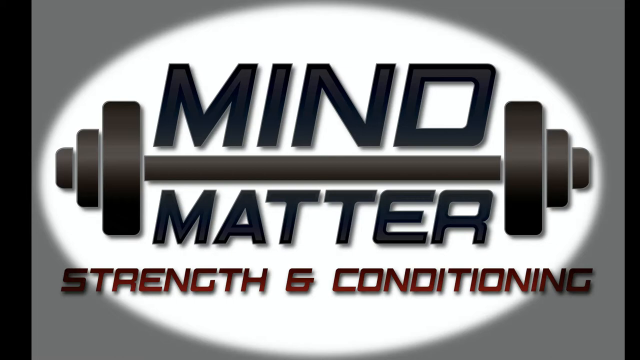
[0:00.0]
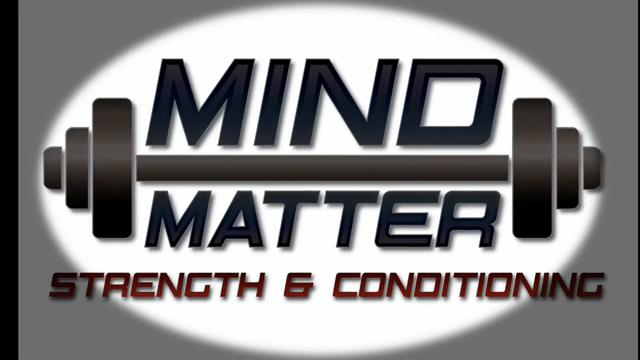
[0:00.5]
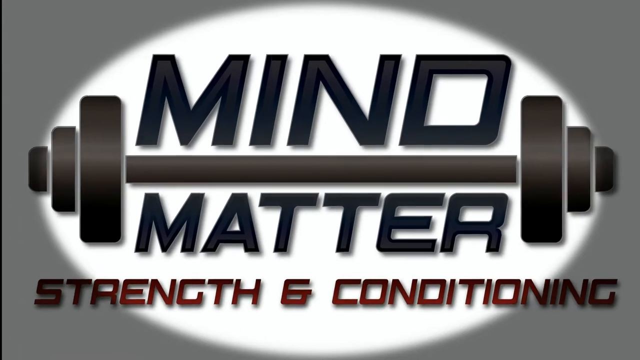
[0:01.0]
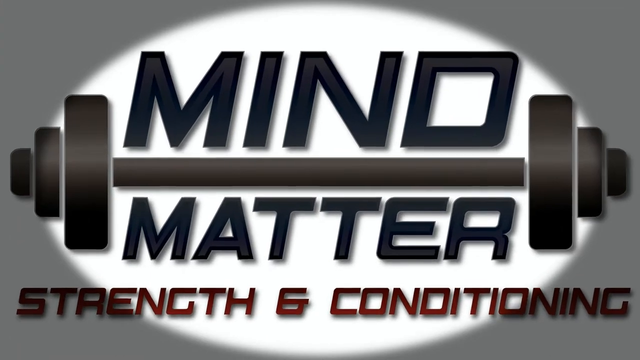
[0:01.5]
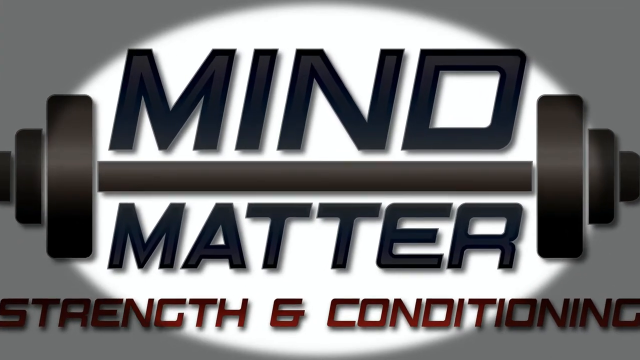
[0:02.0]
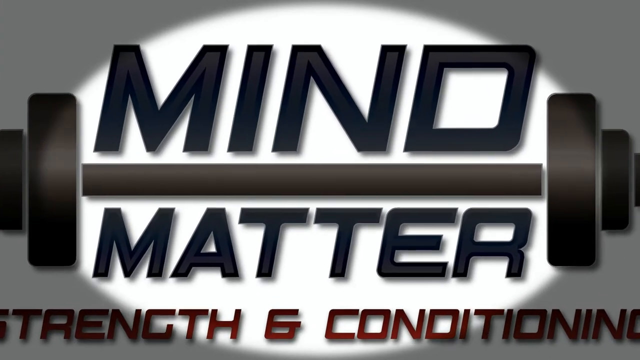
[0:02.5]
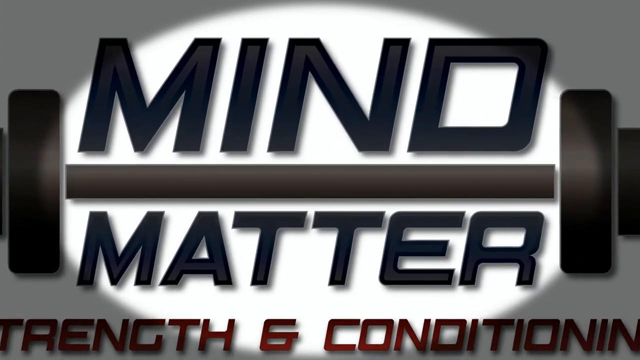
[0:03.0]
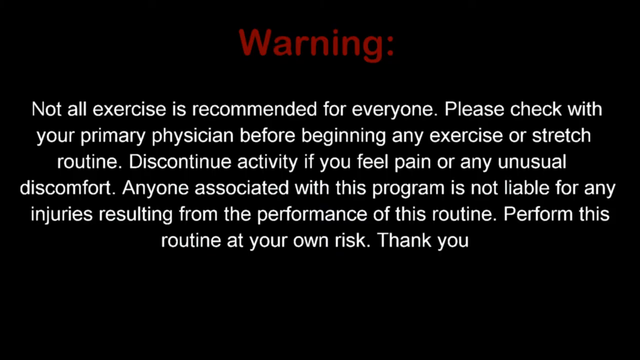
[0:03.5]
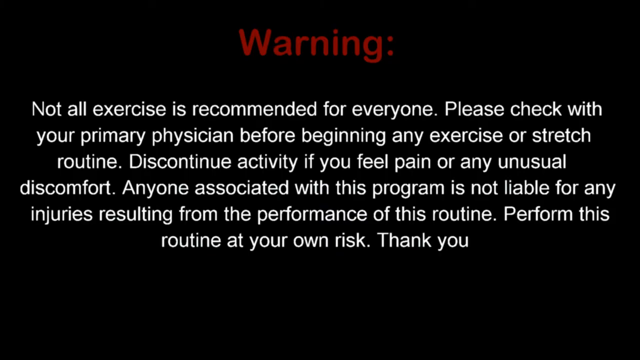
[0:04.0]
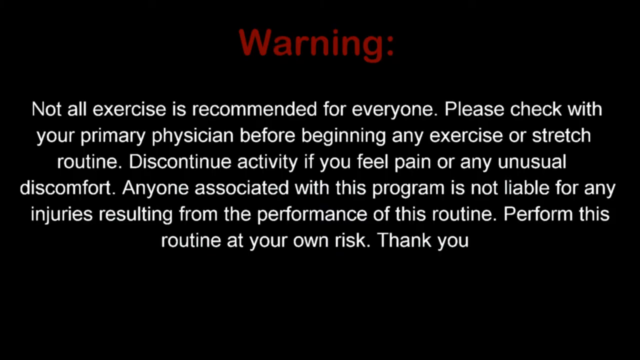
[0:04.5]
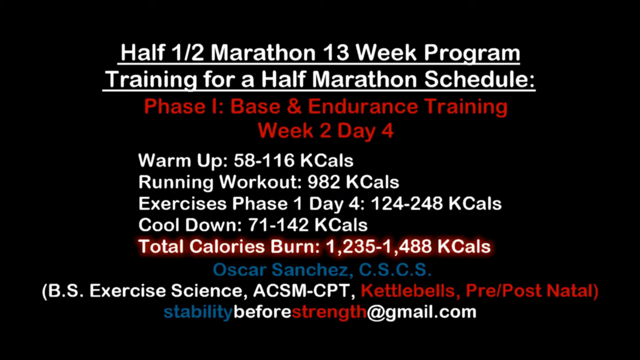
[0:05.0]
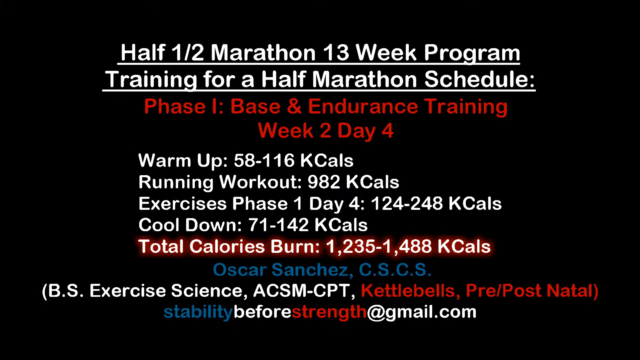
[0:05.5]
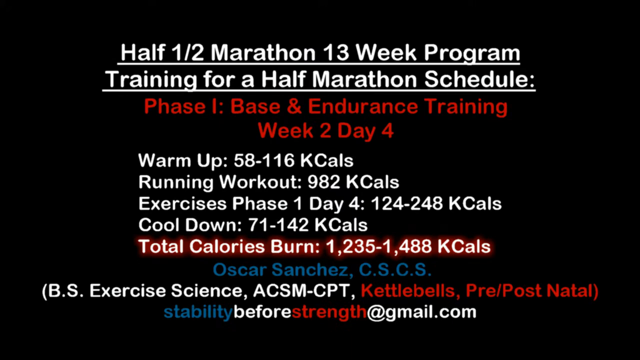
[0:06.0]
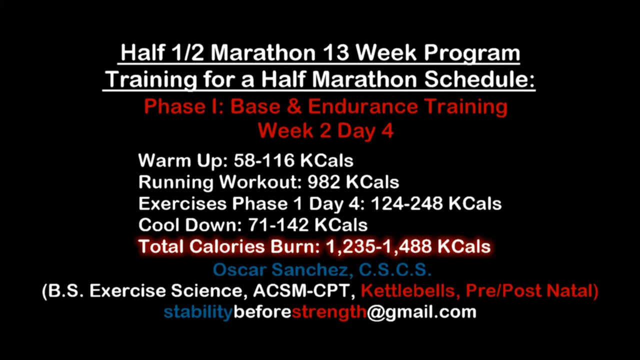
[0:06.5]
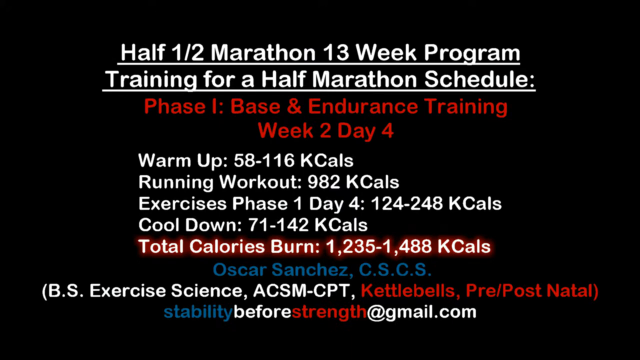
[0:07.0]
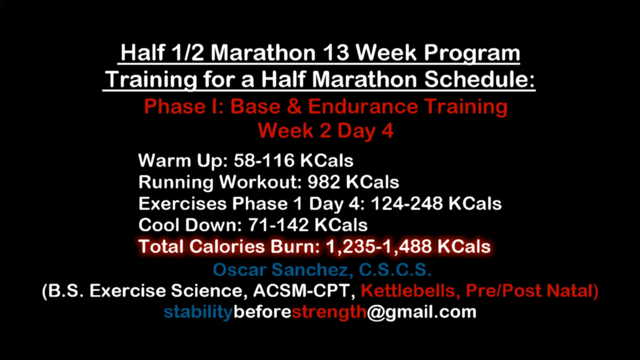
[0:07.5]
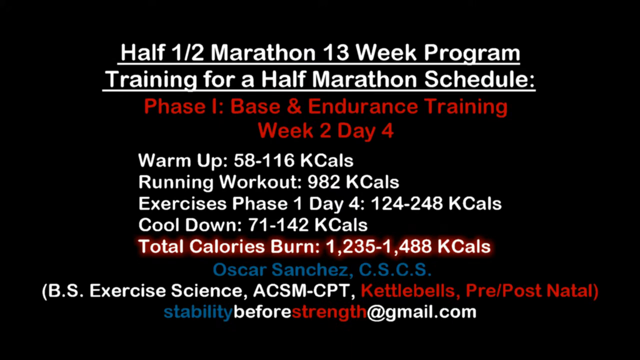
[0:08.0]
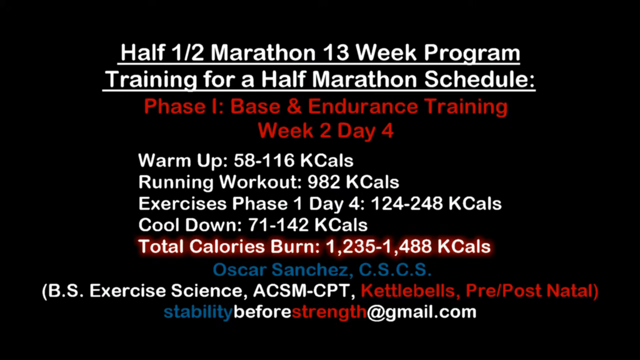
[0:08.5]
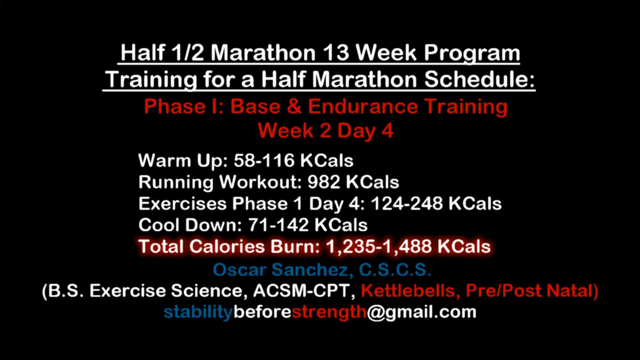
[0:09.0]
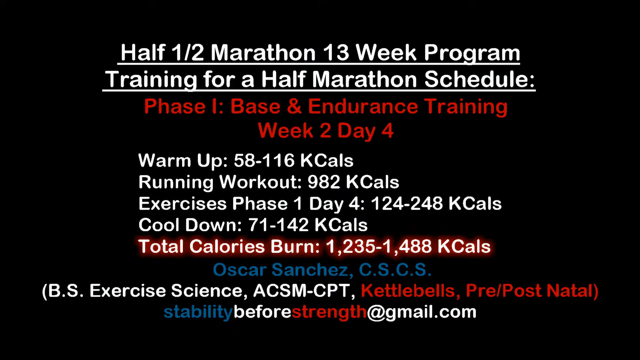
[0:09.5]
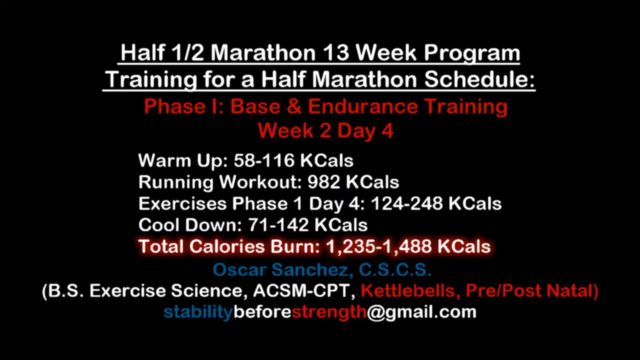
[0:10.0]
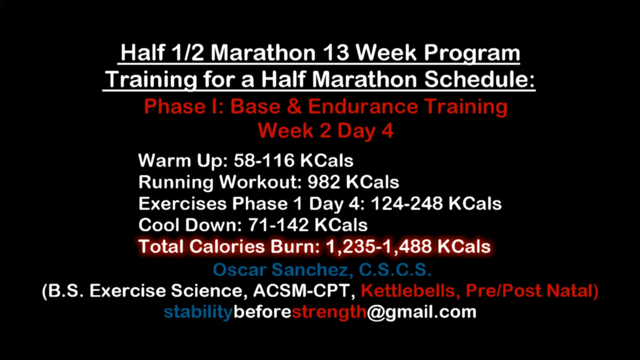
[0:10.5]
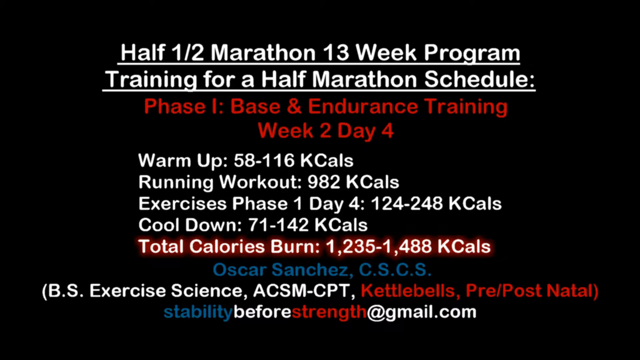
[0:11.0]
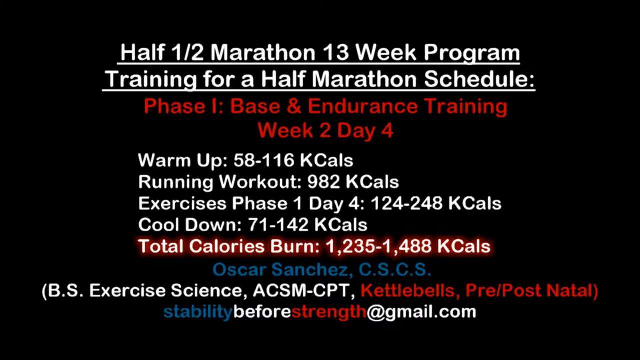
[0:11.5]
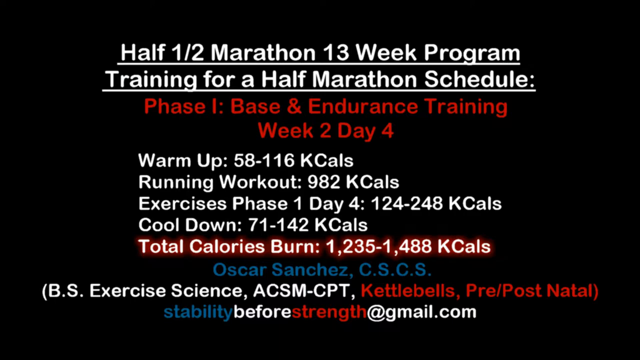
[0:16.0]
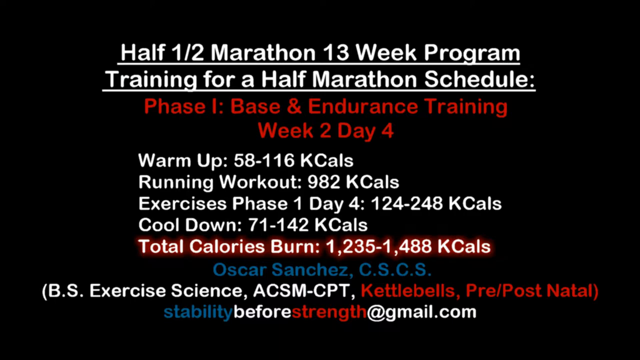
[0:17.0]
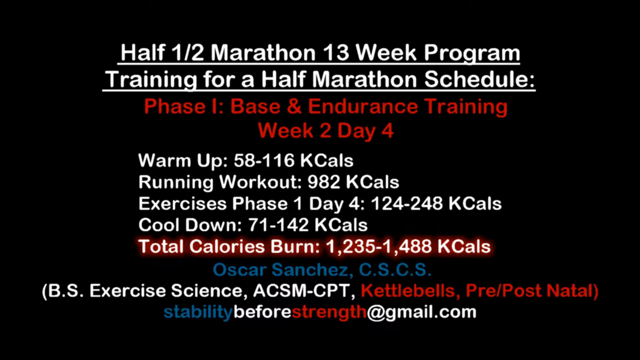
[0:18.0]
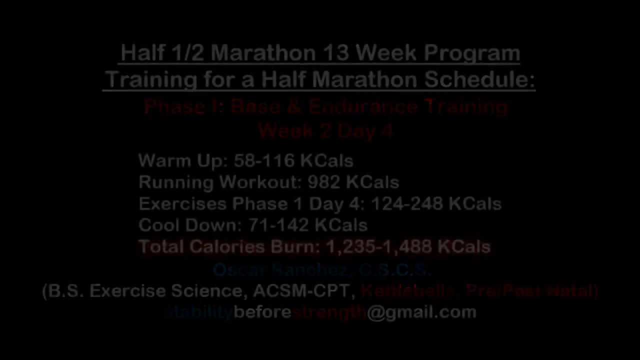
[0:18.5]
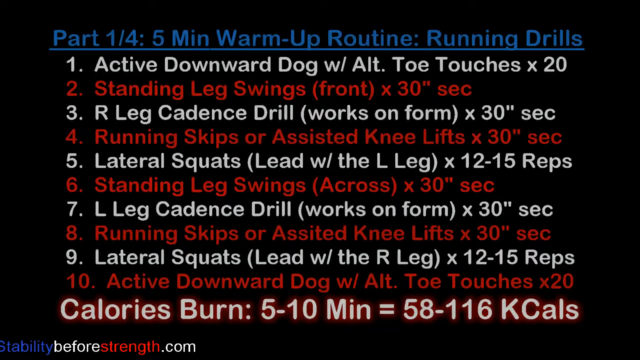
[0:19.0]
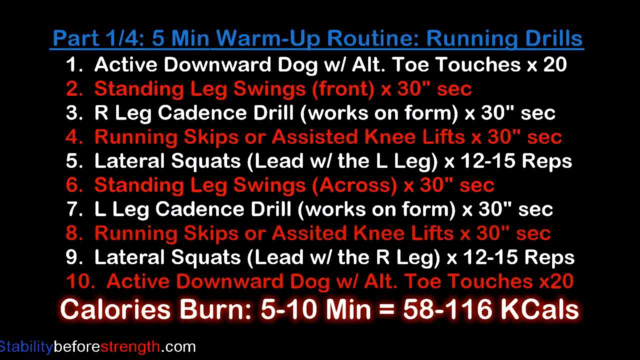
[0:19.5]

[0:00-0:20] A dark grey background has a black border running vertically on the right and left, with a white oval, kind of a spotlight, in the middle. A black dumbbell runs horizontally across it. Above it, in big black capital letters, is "MIND"; underneath that is "MATTER", and underneath that "STRENGTH and CONDITIONING". The camera slowly zooms into this. A warning sign then appears very quickly, too fast to read without pausing. Another screen follows that says "Half marathon 13 week programme" and "This is training for a half marathon schedule". Underneath, in red lettering, it reads "Phase 1, Base and Endurance Training, Week 2, Day 4". Lots of information appears below this. In white writing it says "Warm Up, 58 to 116 calories. Running Workout, 982 calories. Exercises Phase 1, Day 4, 124 to 248 calories. Cool Down, 71 to 142 calories." Underneath, white writing with a red border says "Total Calories Burn, 1,235 to 1,488 calories". Below that is some information about qualifications and an email.